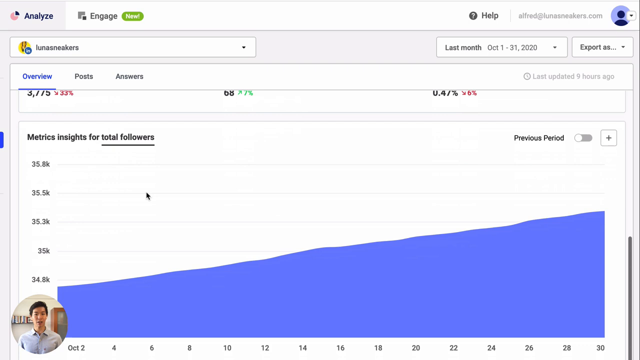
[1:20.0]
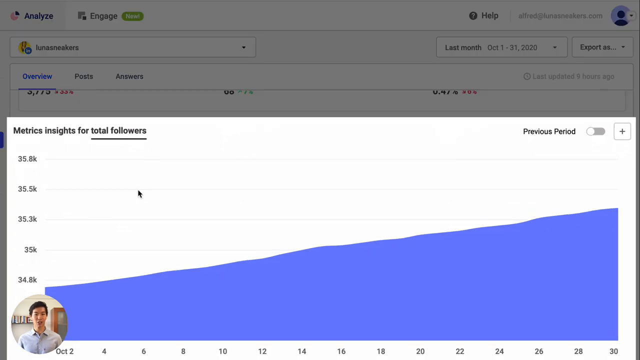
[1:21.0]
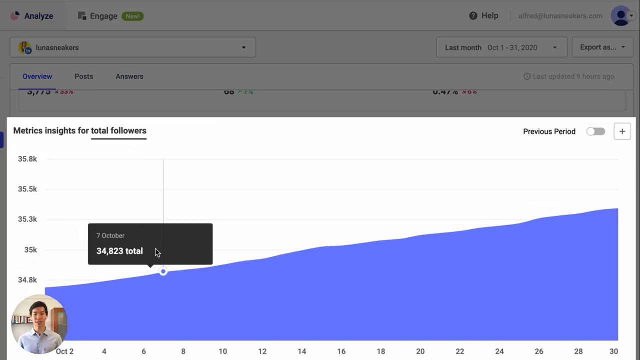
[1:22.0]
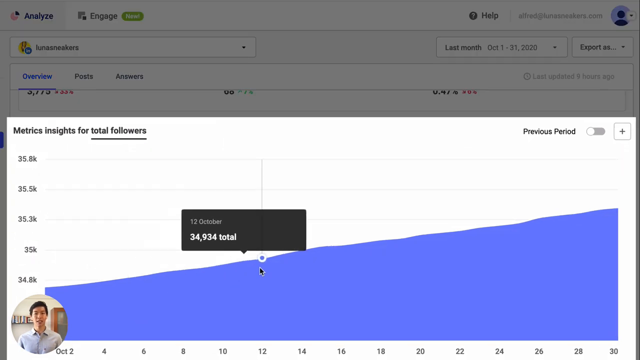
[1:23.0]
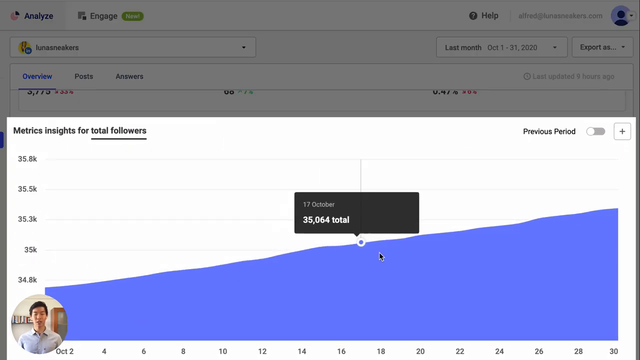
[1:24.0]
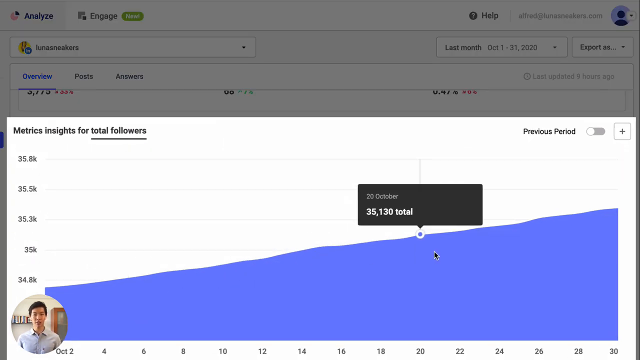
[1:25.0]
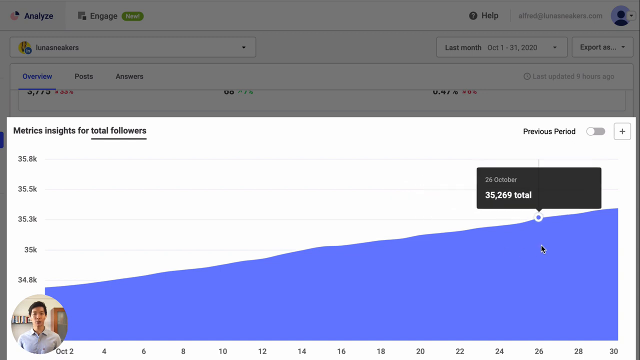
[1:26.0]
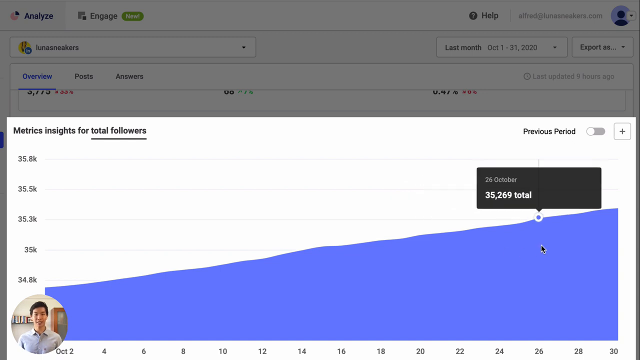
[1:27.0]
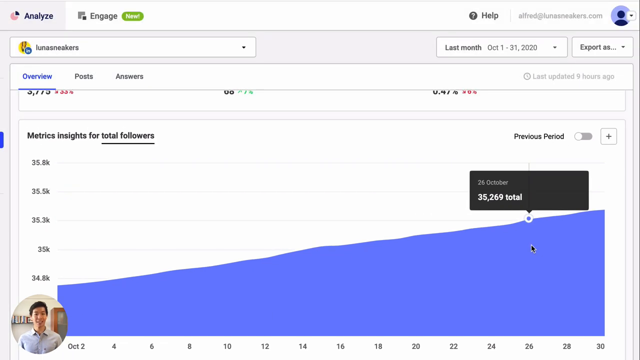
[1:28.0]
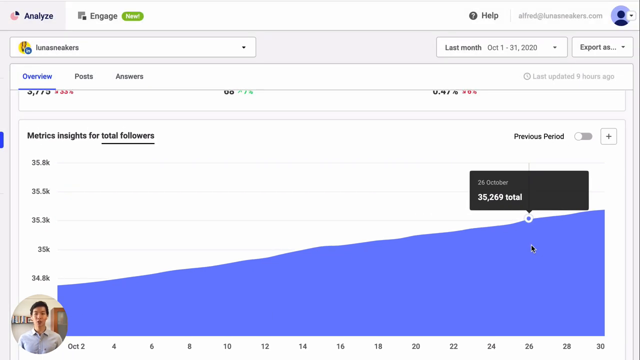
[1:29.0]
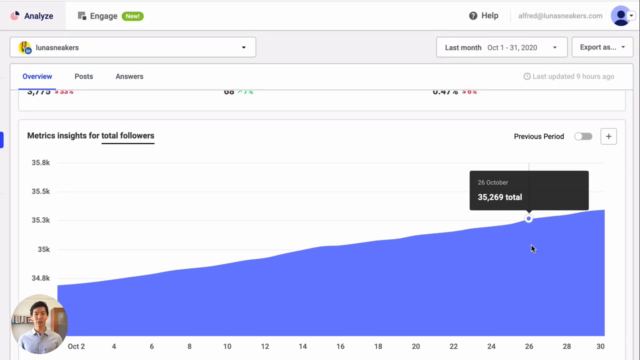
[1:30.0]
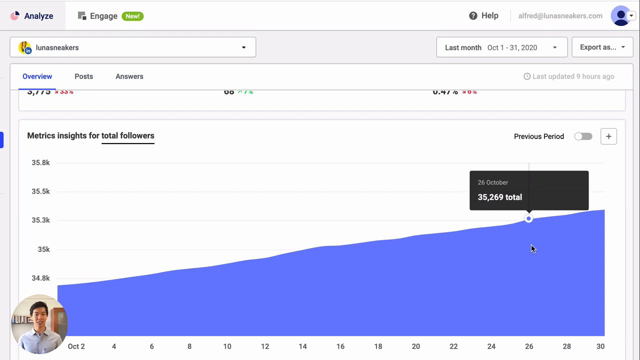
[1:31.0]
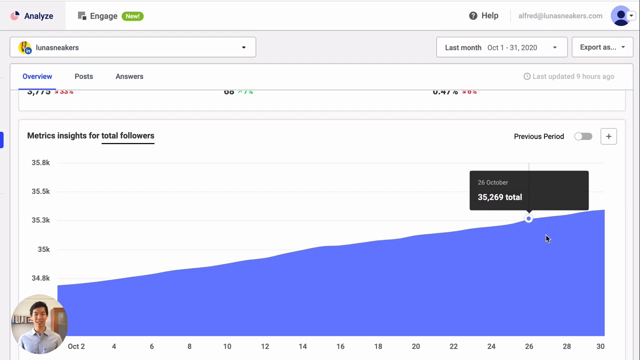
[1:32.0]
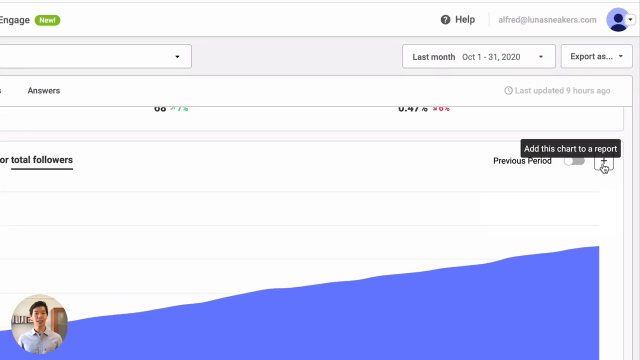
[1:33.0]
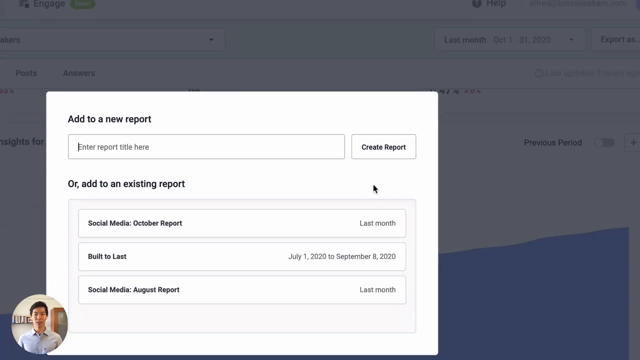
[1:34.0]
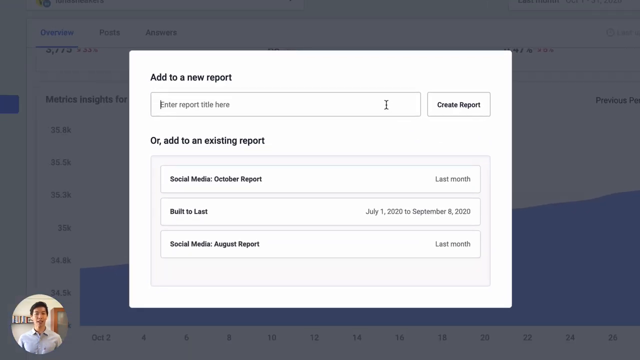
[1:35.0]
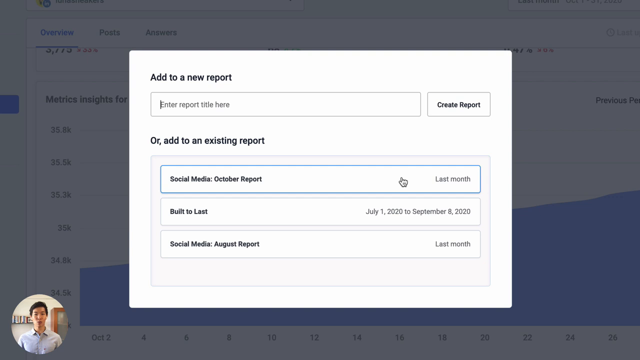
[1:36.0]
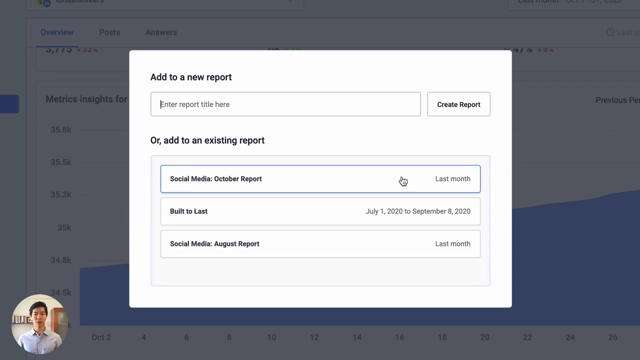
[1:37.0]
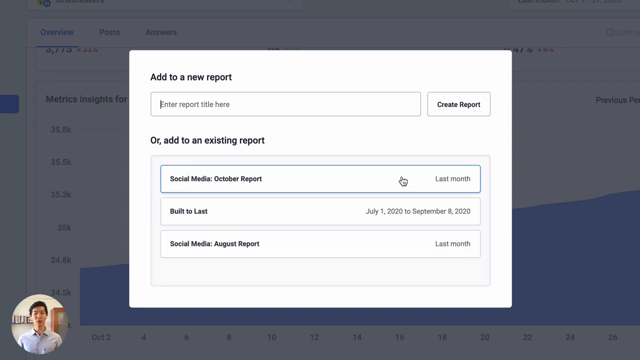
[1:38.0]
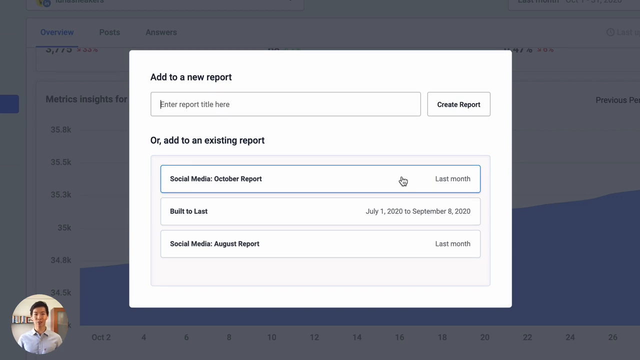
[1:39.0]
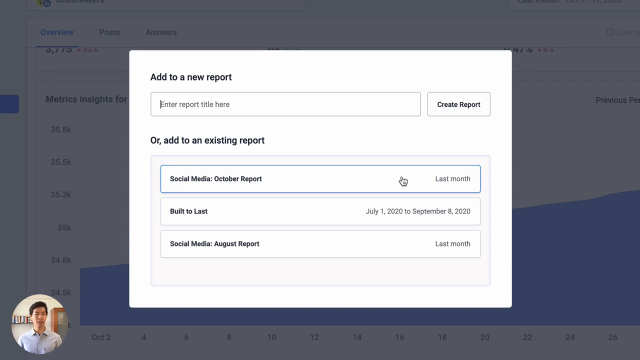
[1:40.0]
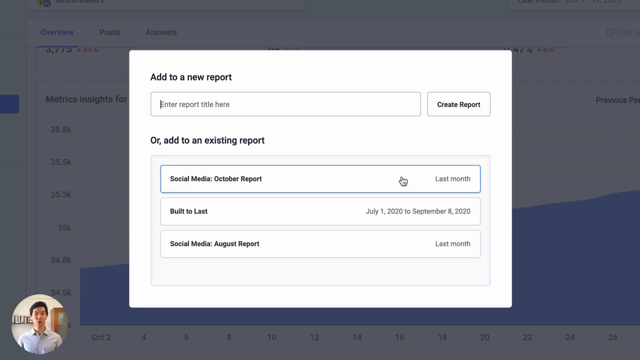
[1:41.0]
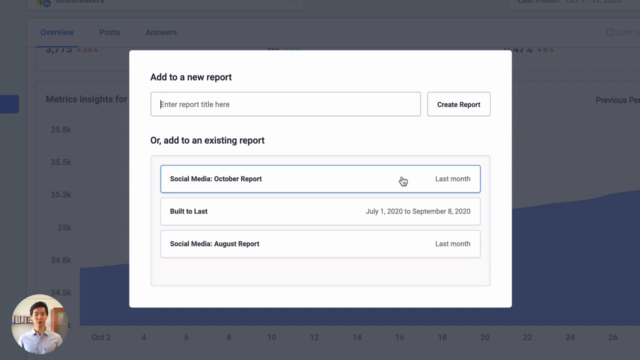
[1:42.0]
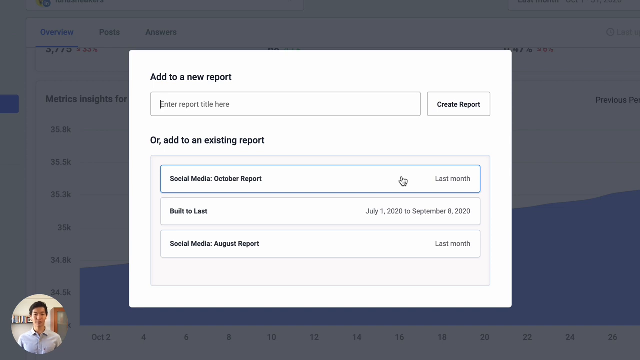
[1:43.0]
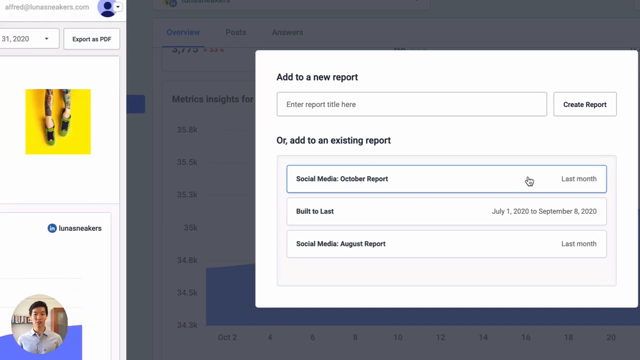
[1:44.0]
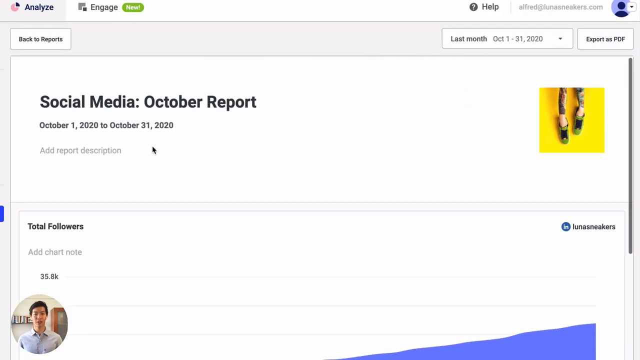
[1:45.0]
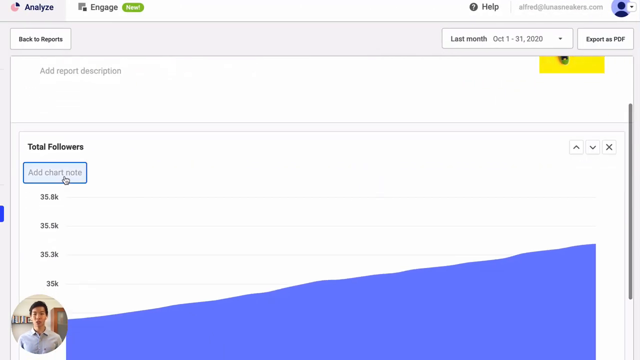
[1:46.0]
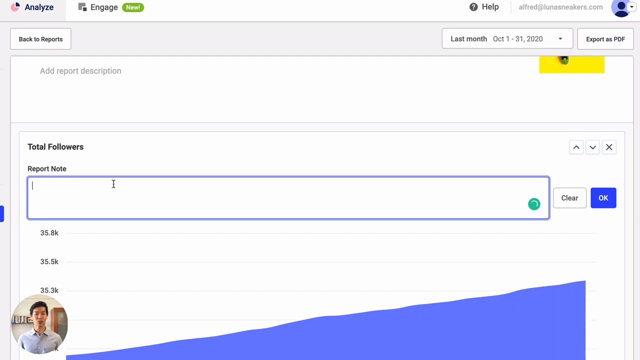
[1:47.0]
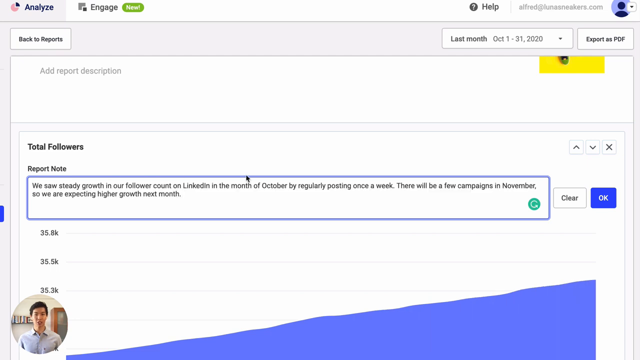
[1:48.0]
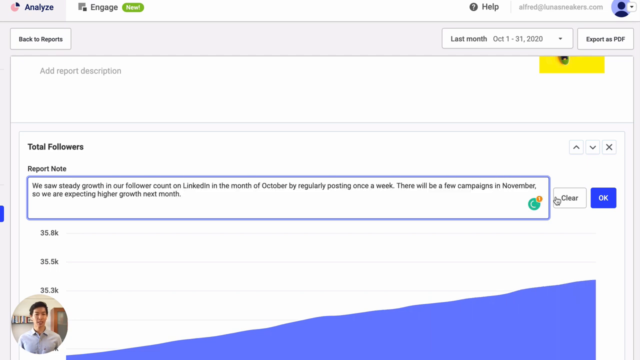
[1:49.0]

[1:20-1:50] The user scrolls down, still on the Overview tab, to Metrics Insights for Total Followers, another graph with the important information in blue. This section is highlighted, kind of popping forward like a pop-up and darkening the background. The mouse kind of hovers over the inclining graph, highlighting different points on it, and stops near the top but not quite at it. The mouse then clicks on a plus sign, with lettering that says "add this chart to a report". A new pop-up window appears that says "add to new report", with a field to enter a title and create the report, as well as an option to add to an existing report. The mouse hovers over a "social media October report" for quite a while, and a time is shown: "last month". The entire screen then shifts away to reveal a new total followers section on Analyze with an option to add a report note, and the user copies and pastes something into it.